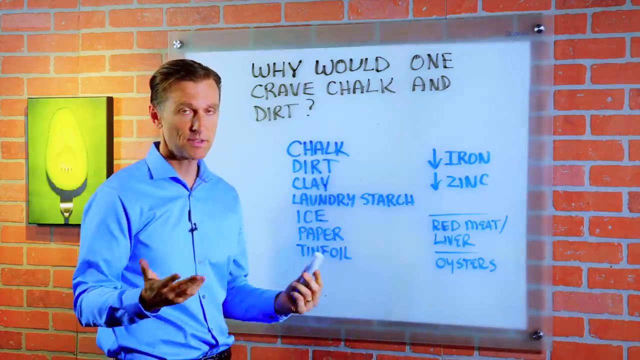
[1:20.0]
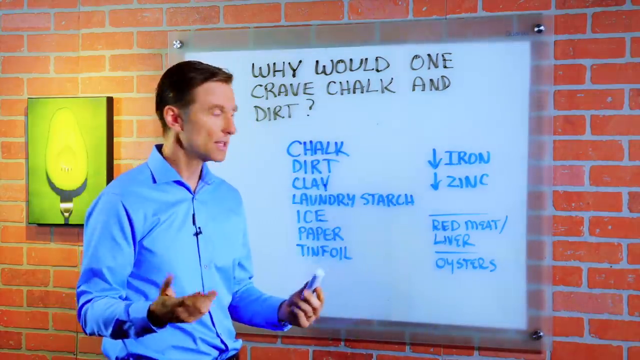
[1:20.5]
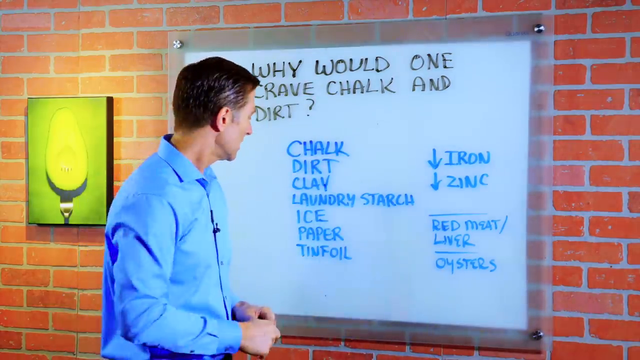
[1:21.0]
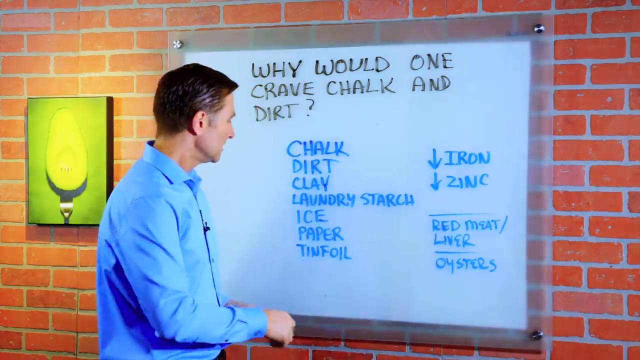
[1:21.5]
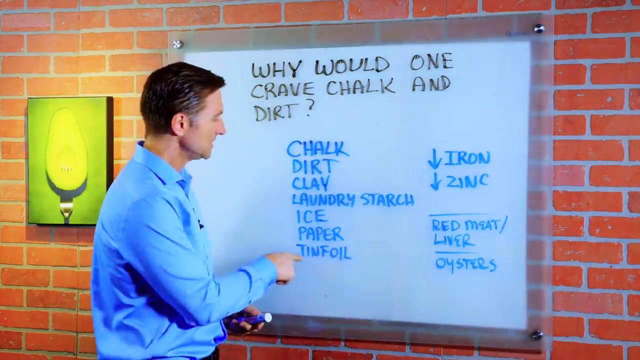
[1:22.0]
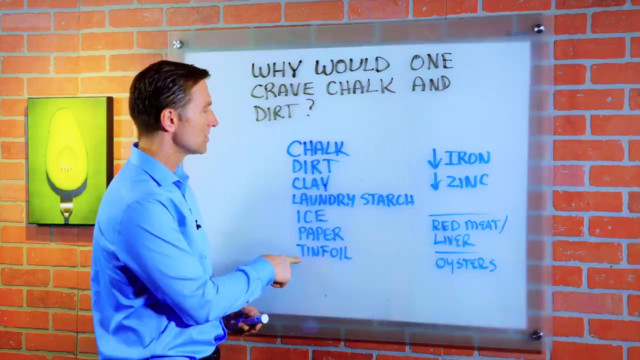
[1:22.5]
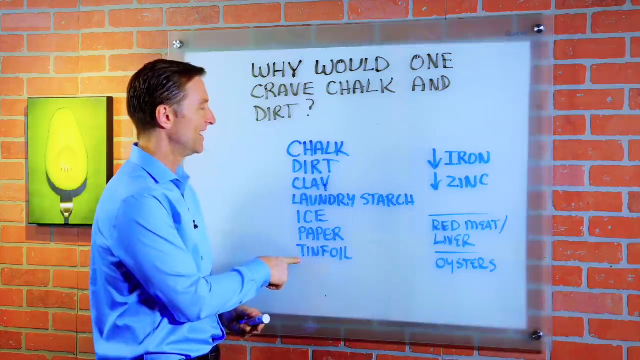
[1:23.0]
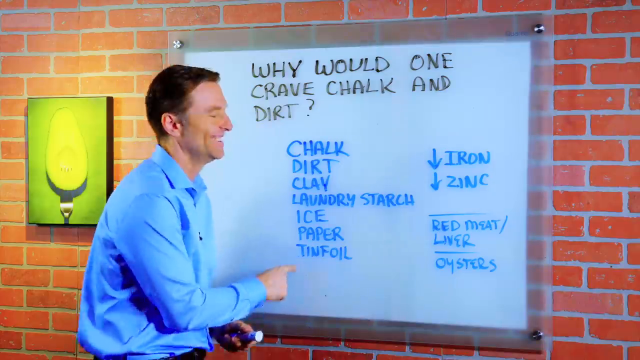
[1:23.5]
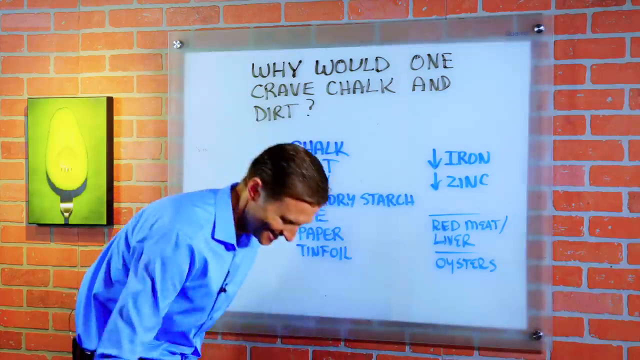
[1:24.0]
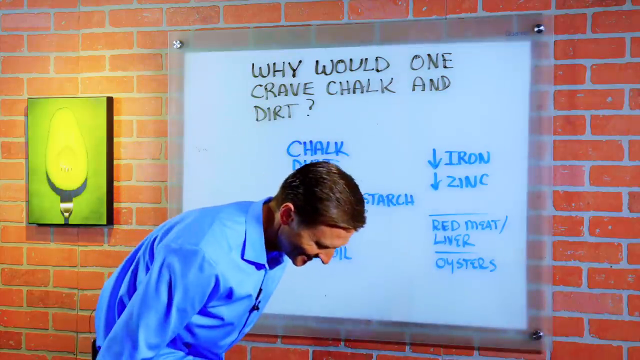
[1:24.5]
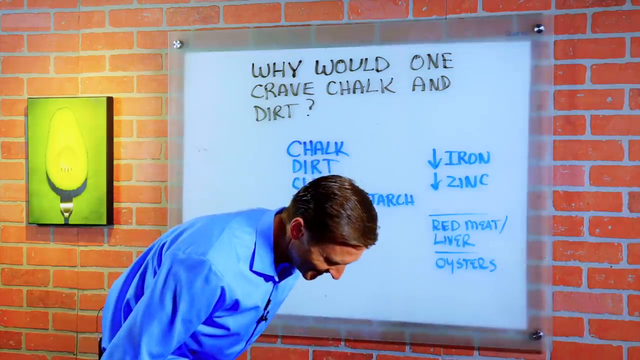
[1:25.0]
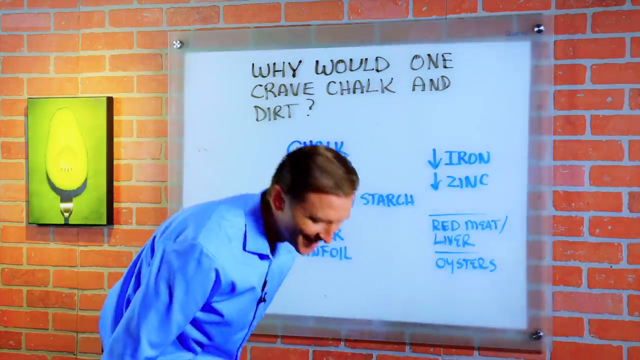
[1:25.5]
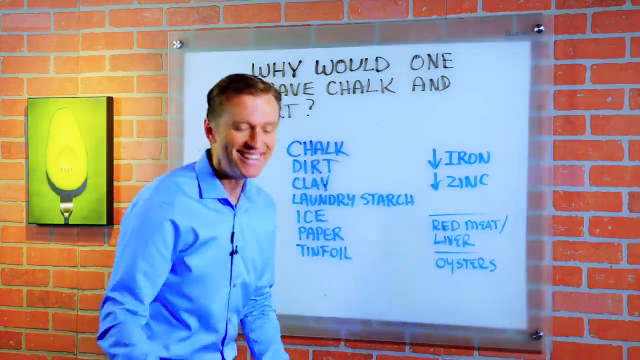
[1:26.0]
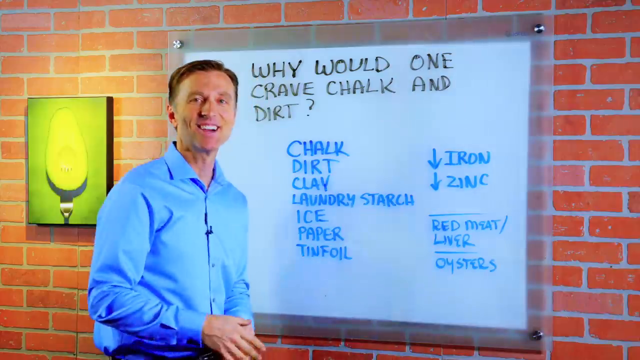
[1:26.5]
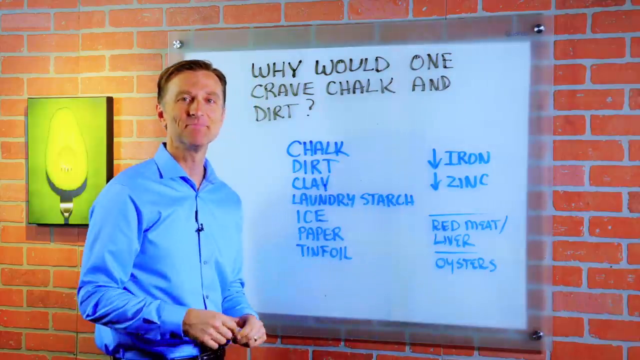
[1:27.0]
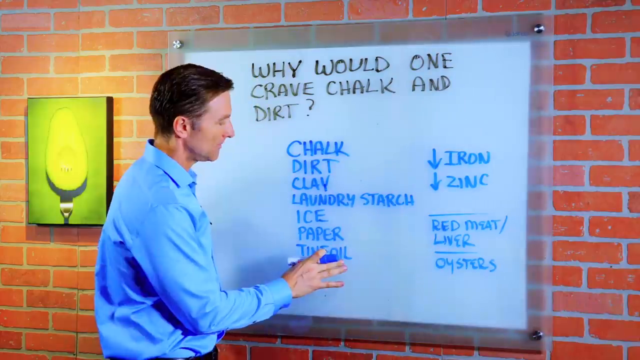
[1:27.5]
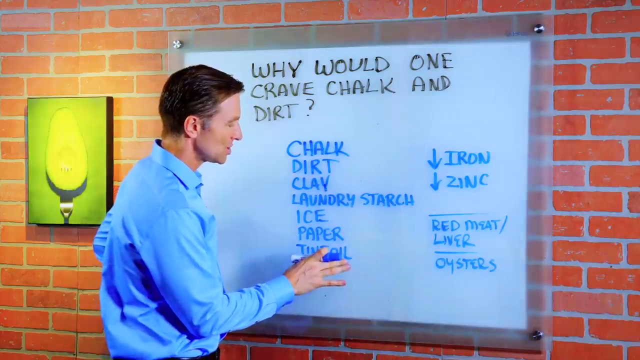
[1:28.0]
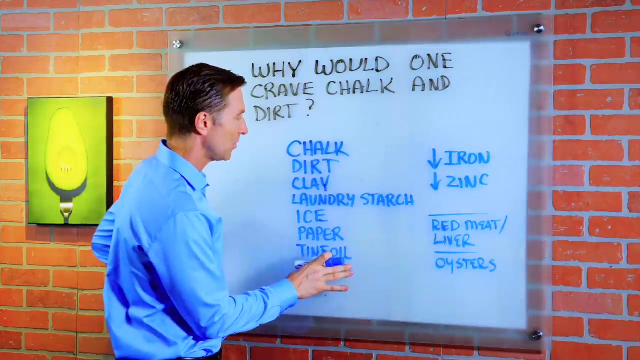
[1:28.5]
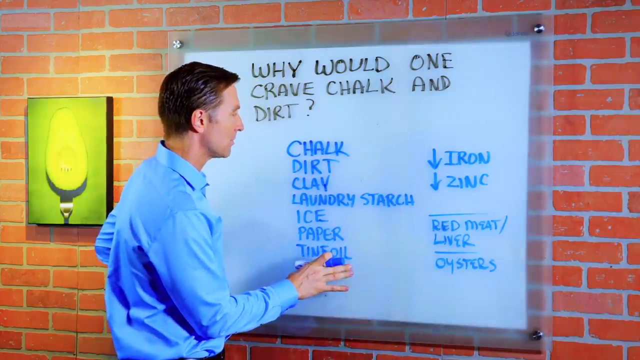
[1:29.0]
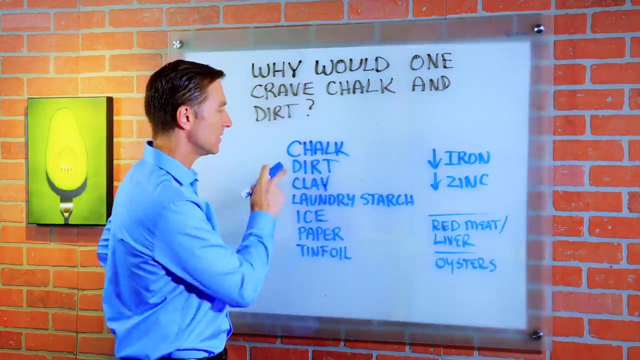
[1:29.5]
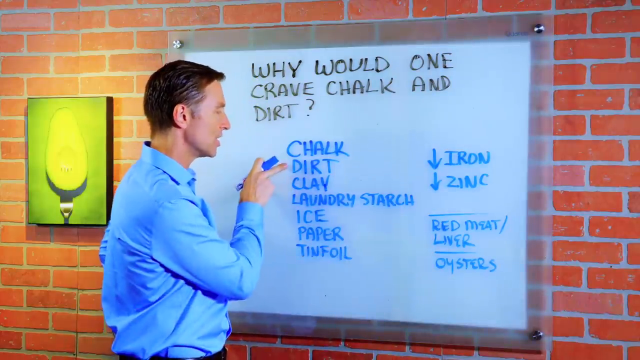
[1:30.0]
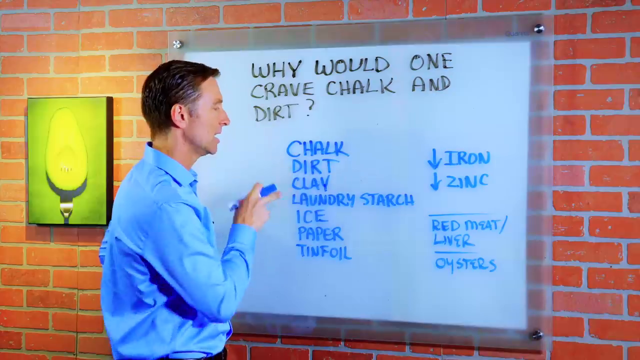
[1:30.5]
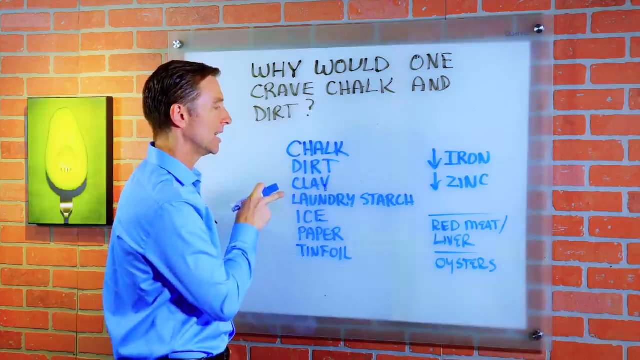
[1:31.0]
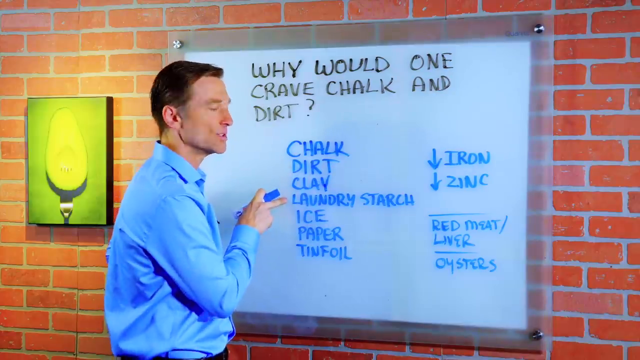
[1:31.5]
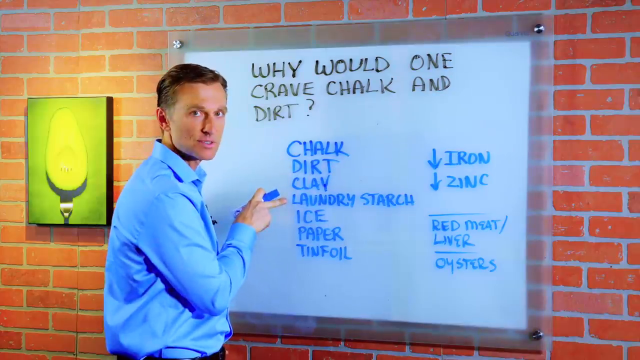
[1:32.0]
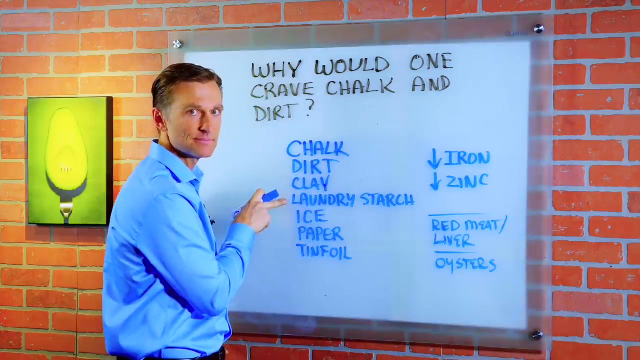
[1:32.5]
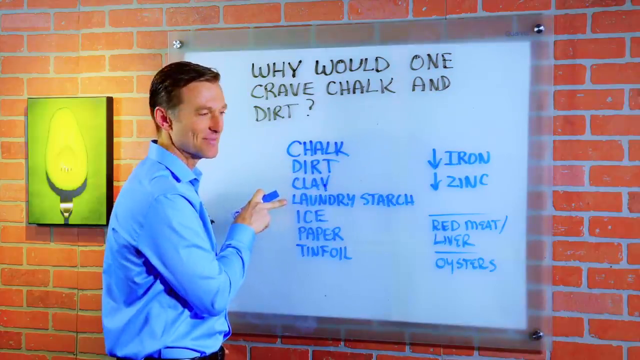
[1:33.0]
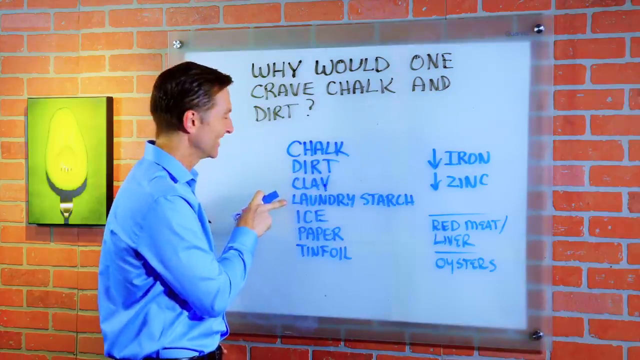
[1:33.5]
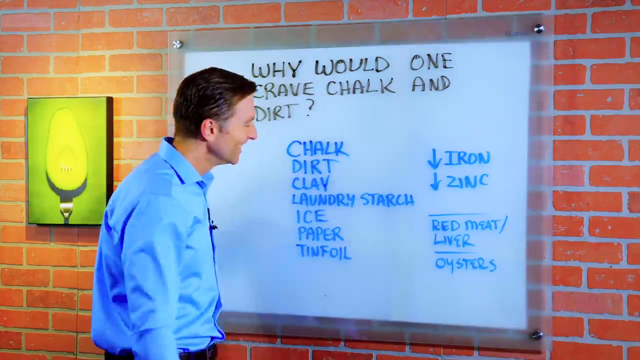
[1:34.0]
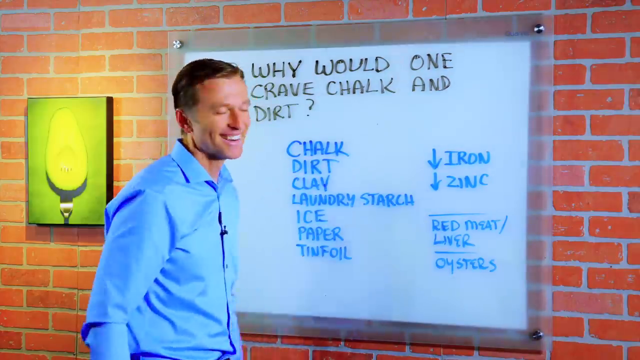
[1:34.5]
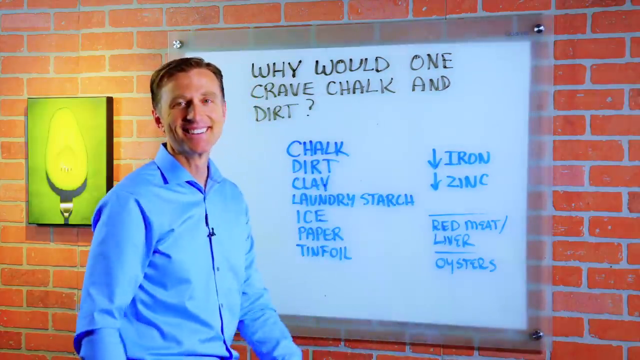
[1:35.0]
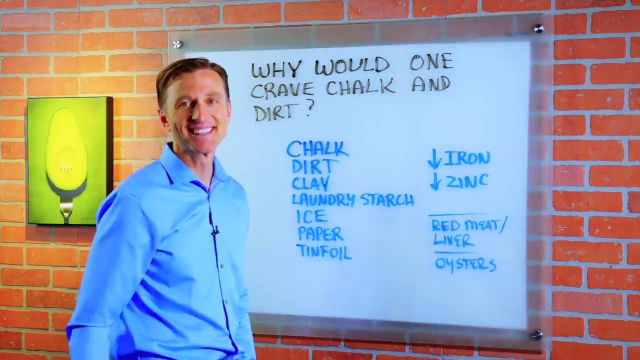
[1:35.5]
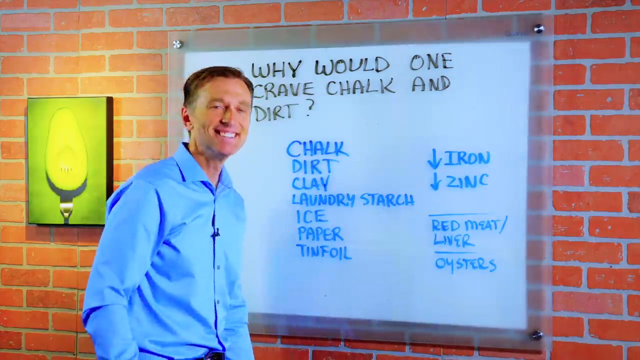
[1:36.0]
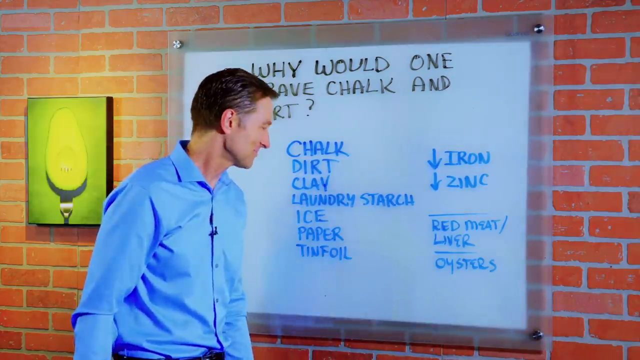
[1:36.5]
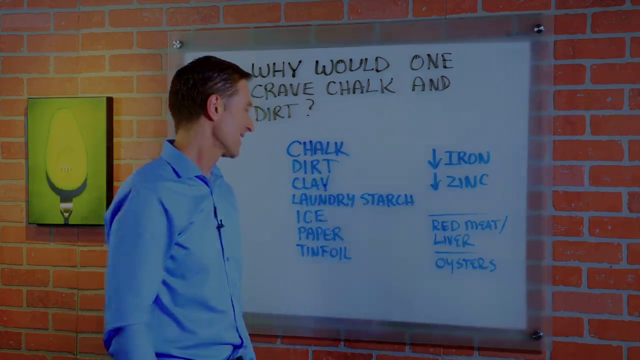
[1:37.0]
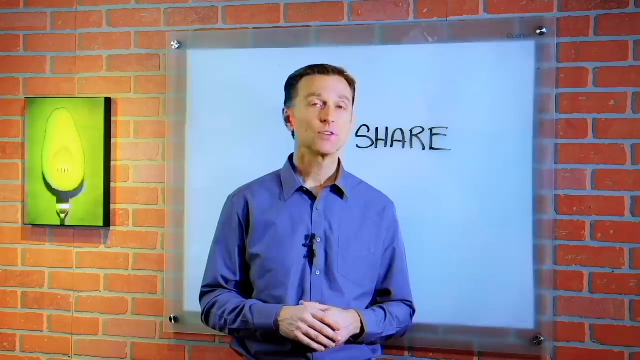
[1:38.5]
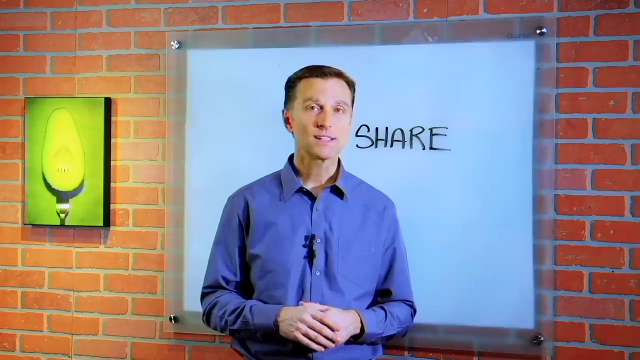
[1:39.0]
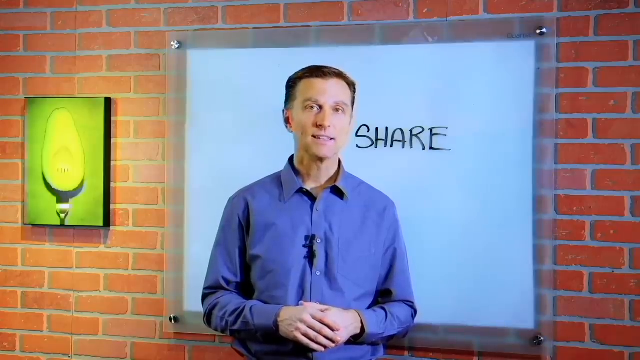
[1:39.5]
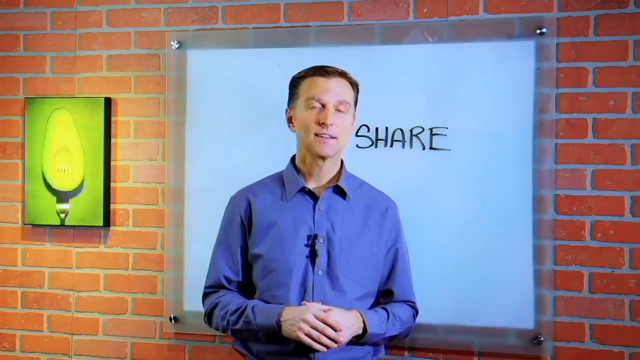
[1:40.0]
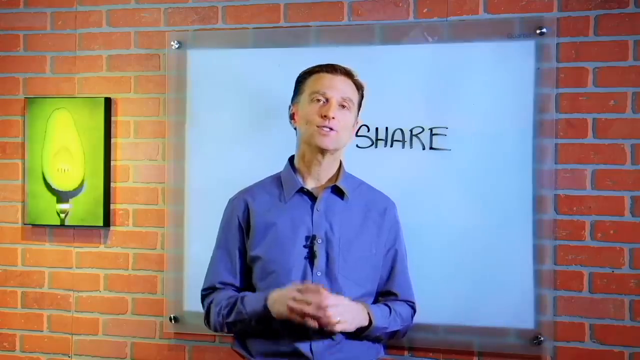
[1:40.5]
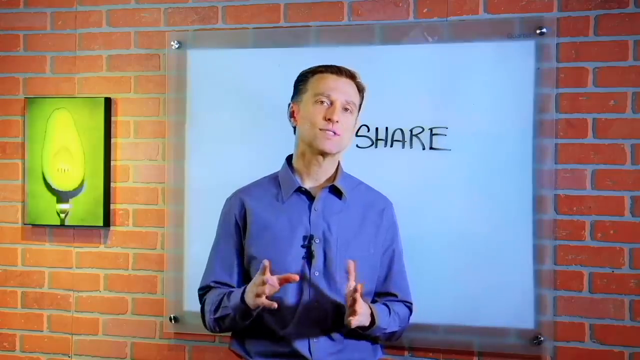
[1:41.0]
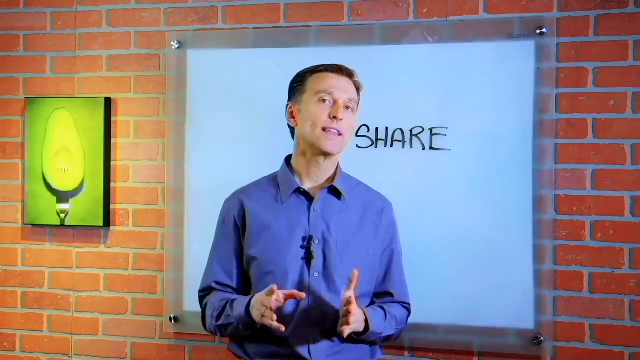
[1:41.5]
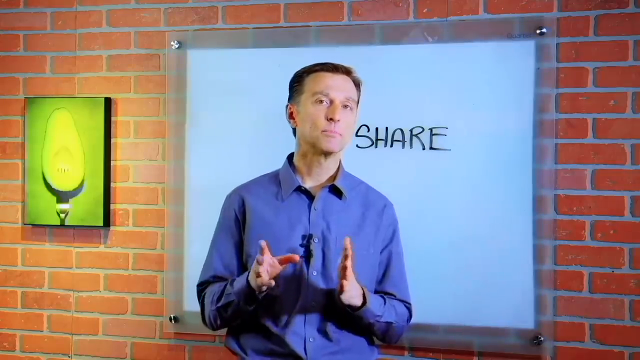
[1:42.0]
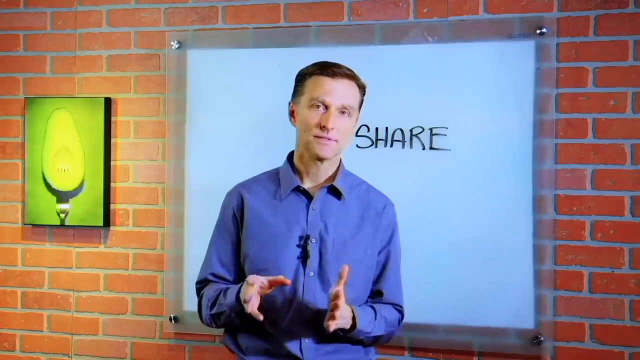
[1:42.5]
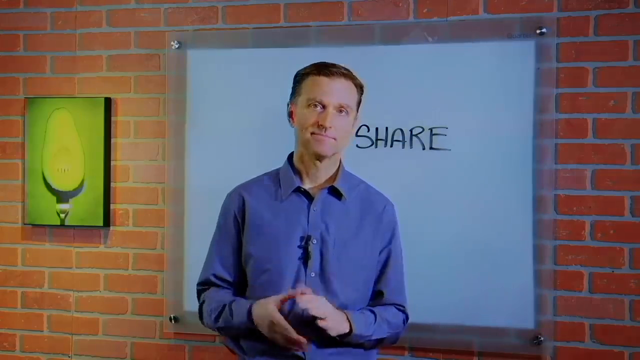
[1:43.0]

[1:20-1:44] A man in a blue collared shirt, with a small black microphone clipped to it, holds something in his hand. Directly behind him is a whiteboard that says "Why would one crave chalk and dirt?" at the top, and behind that is a brick wall with a small green picture of what looks to be an avocado on a fork. The man seems to find something funny and laughs, speaking into the camera at times. He then goes over different areas of the whiteboard, pointing to them with his blue marker, and starts laughing once again. The video then turns black, and the man is shown standing in front of the camera speaking, with a black microphone clipped to his shirt and a different whiteboard behind him that says "Share".